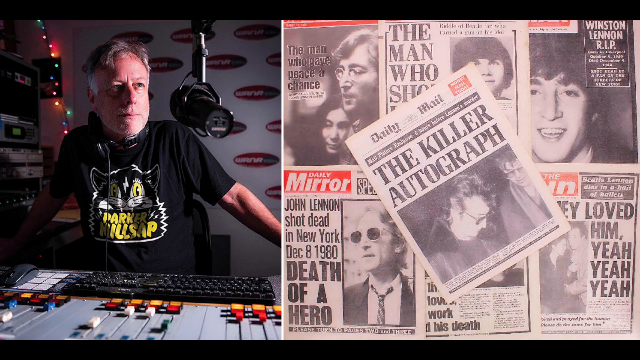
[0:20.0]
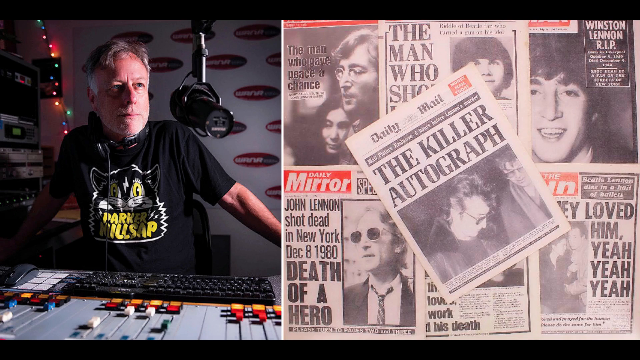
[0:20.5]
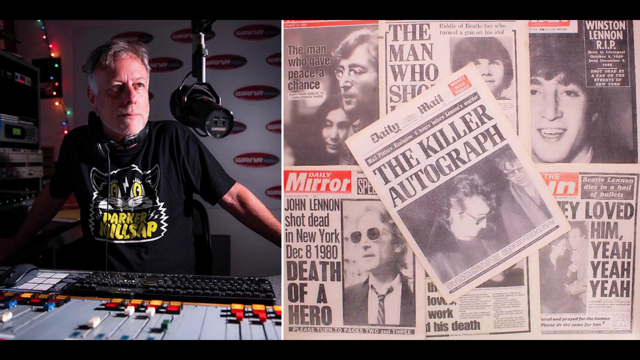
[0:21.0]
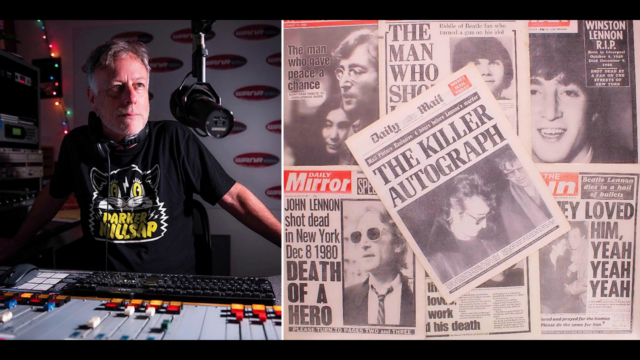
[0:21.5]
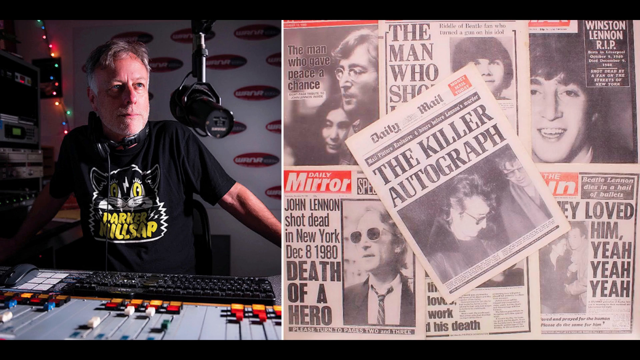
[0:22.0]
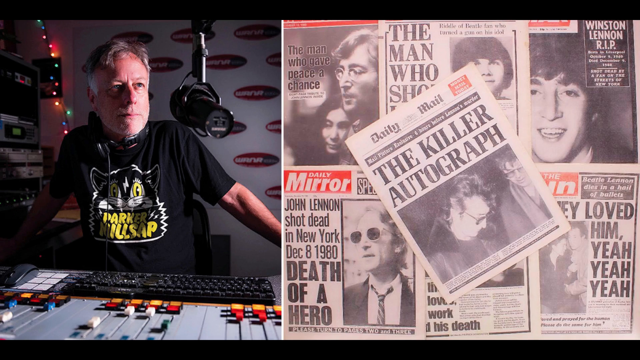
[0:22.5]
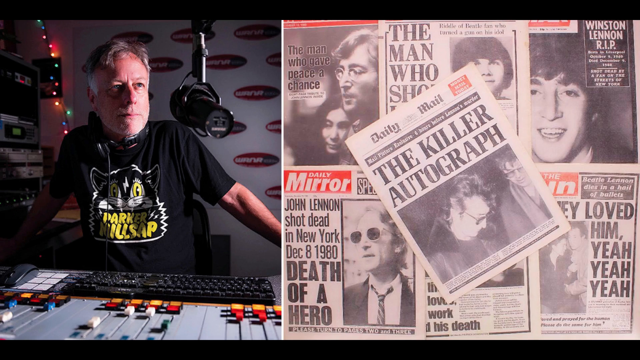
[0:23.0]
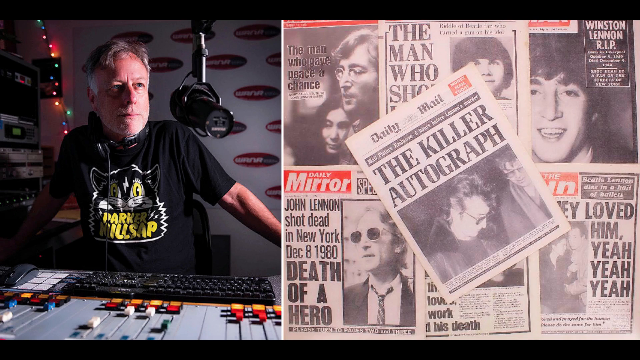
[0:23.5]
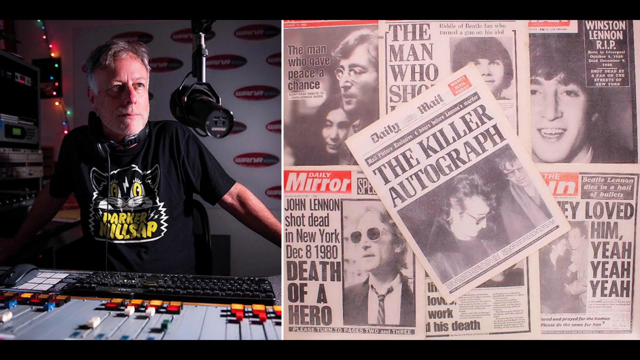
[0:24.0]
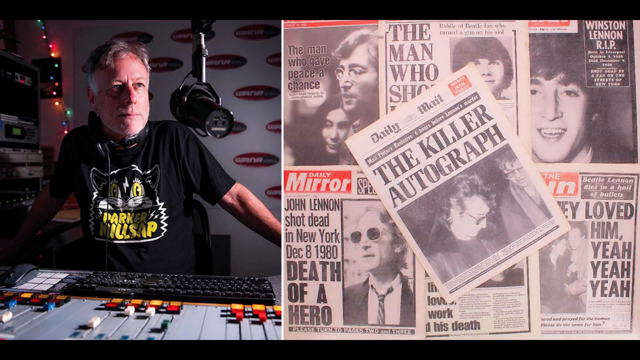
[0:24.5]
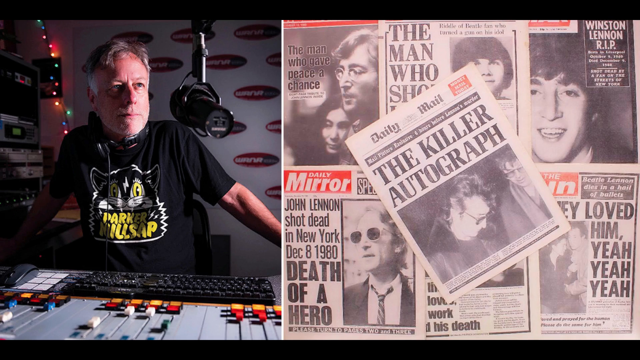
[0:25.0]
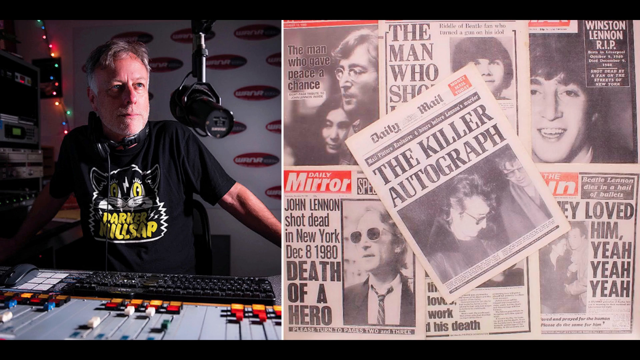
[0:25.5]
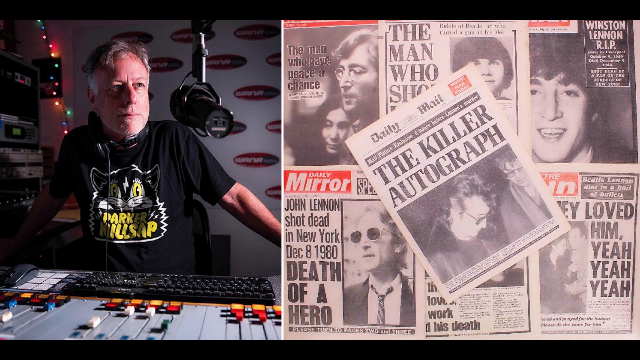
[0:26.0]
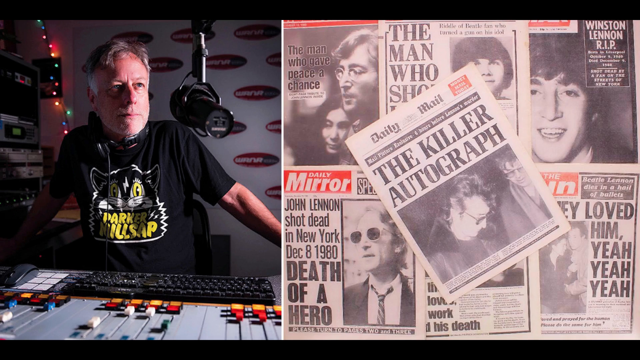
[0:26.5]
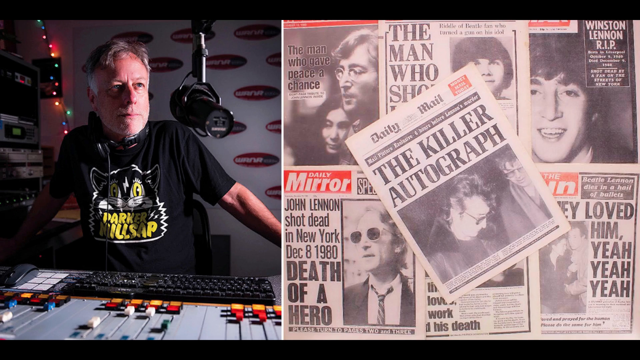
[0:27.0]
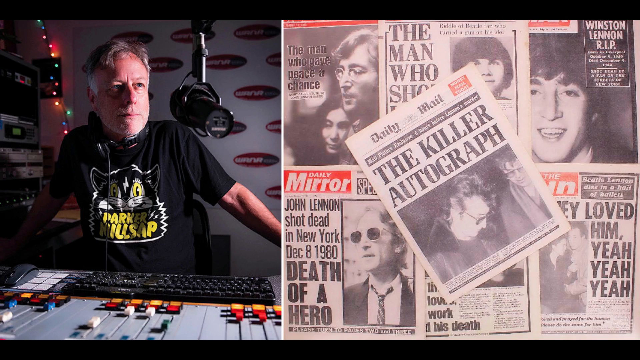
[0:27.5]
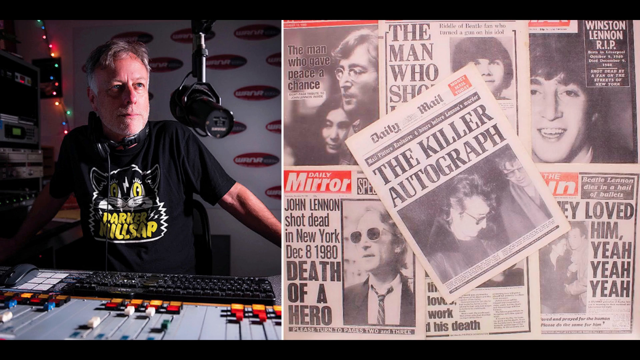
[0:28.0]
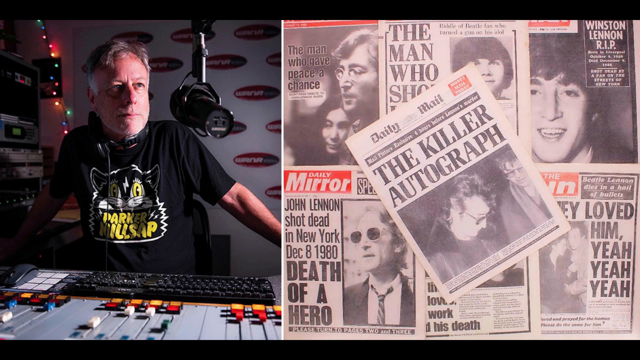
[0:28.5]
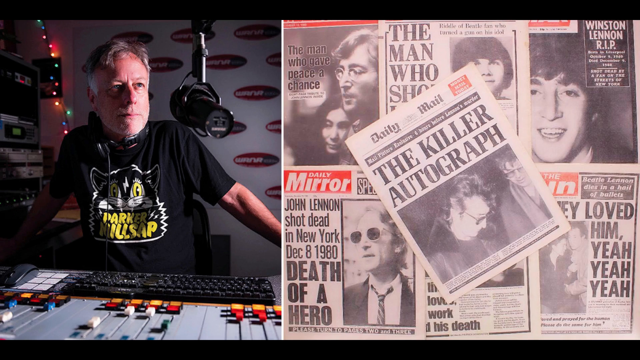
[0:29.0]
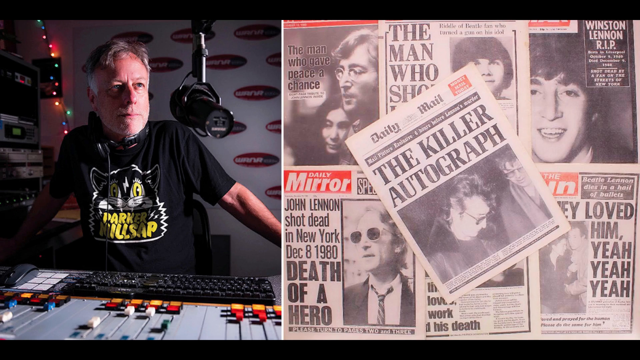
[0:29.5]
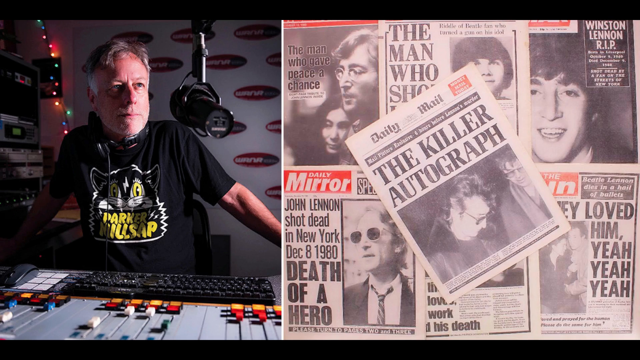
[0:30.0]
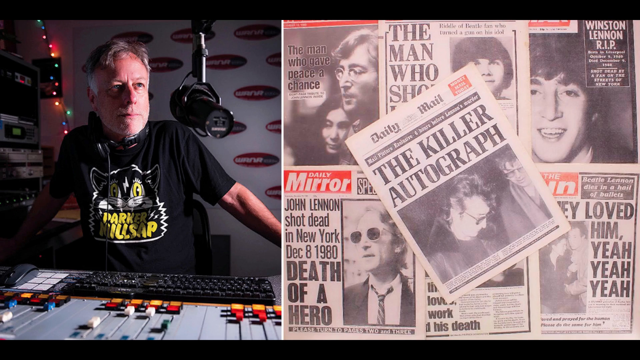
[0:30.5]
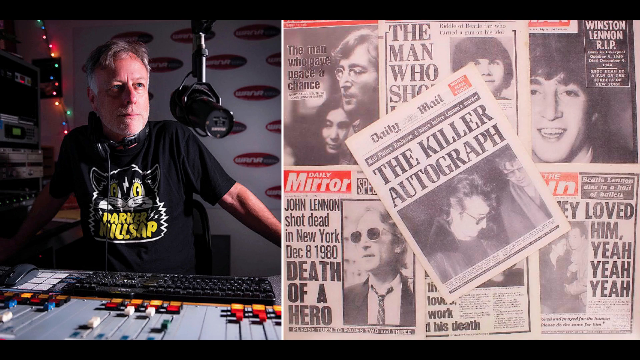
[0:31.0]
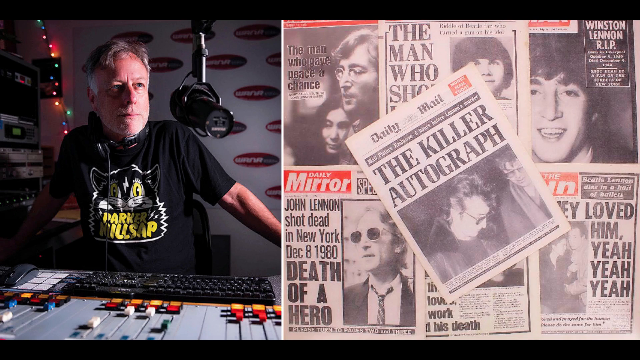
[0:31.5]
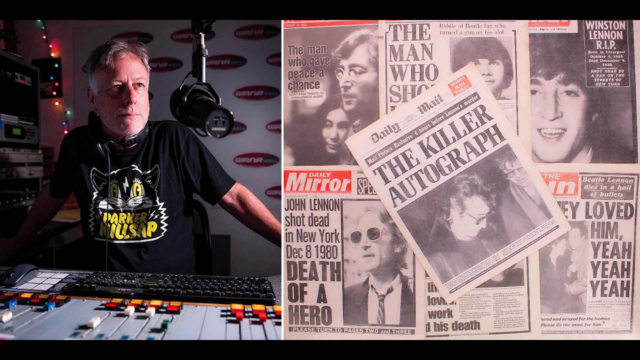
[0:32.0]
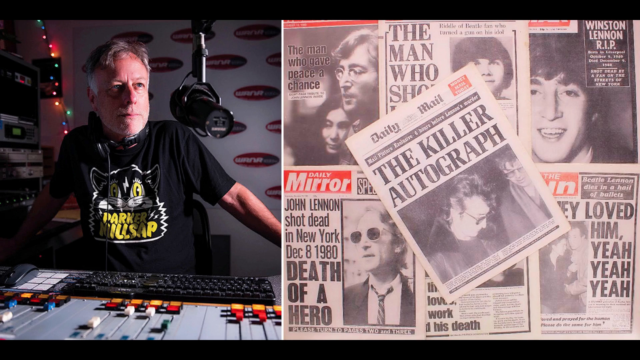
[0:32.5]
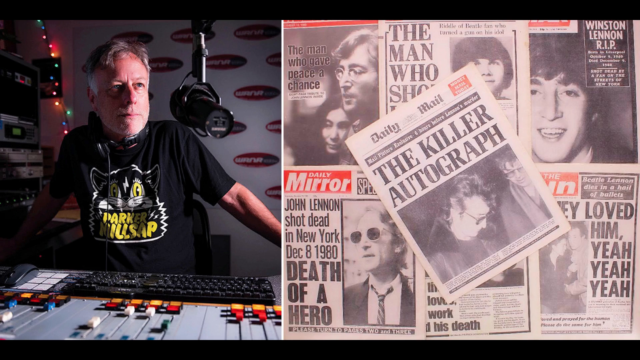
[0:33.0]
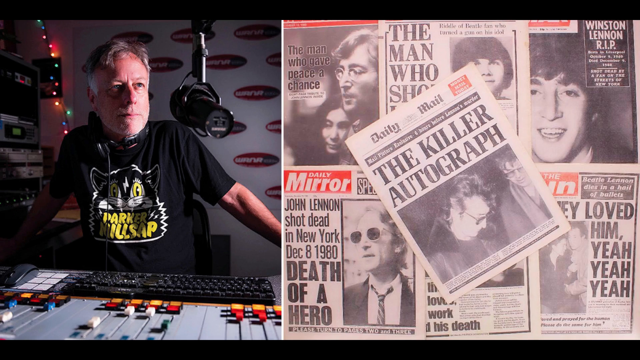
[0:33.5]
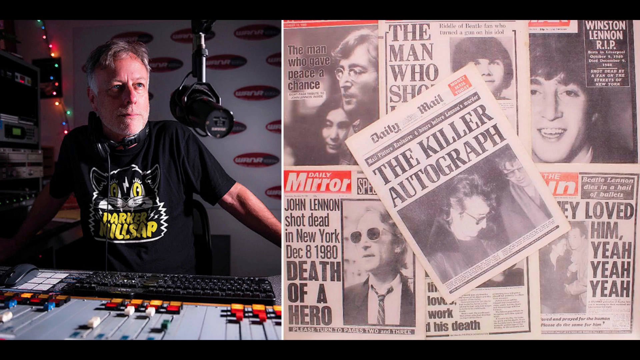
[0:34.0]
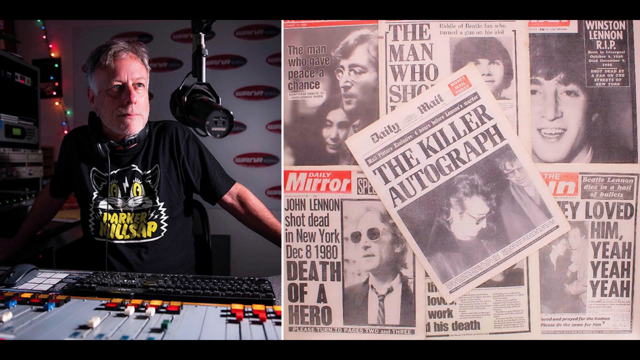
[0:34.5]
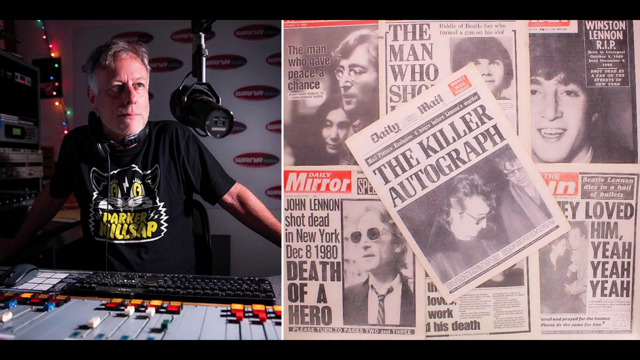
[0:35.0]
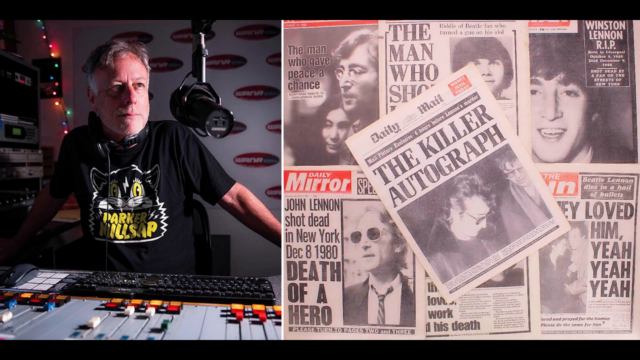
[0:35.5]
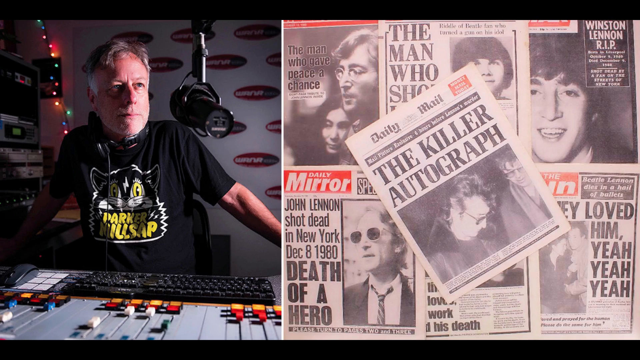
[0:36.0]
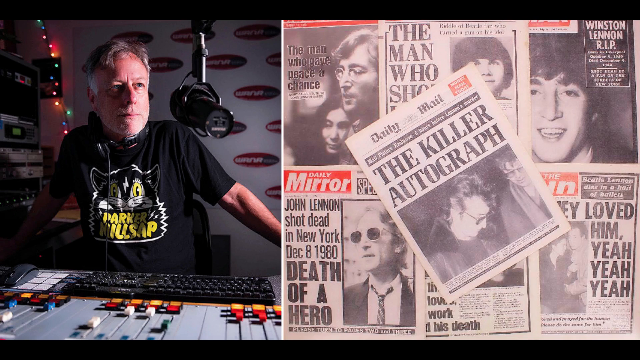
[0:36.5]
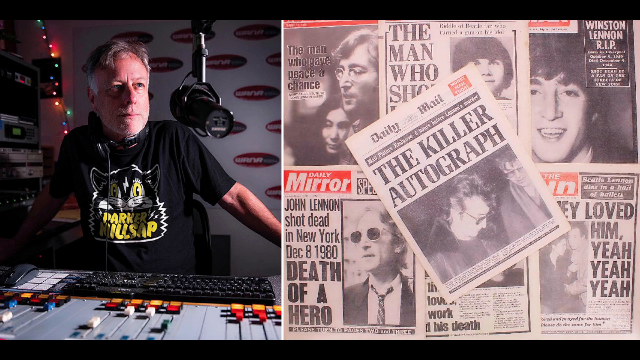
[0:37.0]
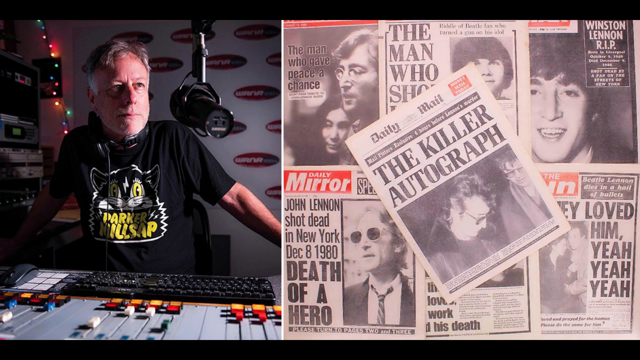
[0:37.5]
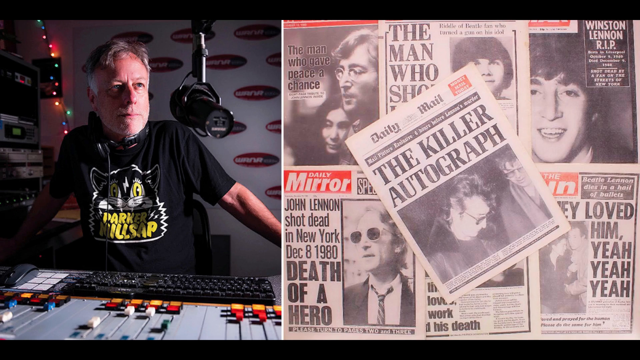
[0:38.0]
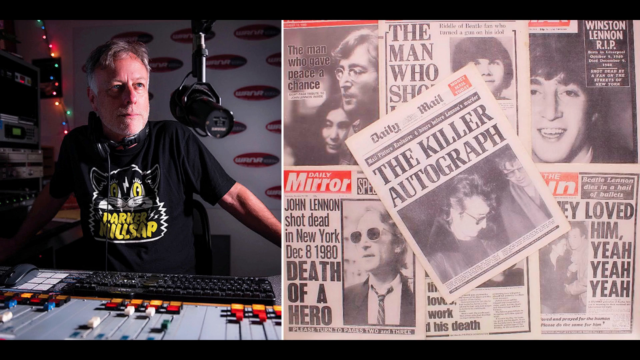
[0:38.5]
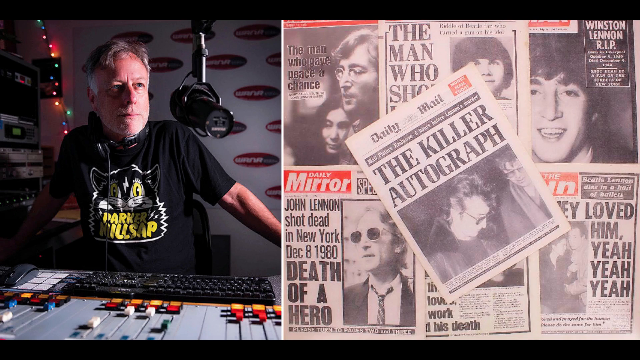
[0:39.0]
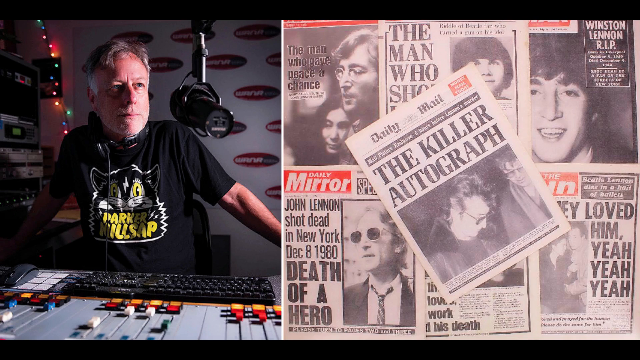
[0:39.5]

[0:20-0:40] The same split-screen view continues, with the radio disc jockey on the left and the newspaper clippings on the right. The right side appears to show six different newspaper front pages laid out, three on the top and three on the bottom, with a seventh newspaper resting on top of the grid, slanted a little to the left. This top newspaper is in black and white, with a large headline that reads "the killer autograph" and a picture of a man with his head down, wearing glasses, with black hair. He stands next to what appears to be a woman with glasses and short hair who looks to have a scarf on; the image is a profile shot from the chest up. On the clippings in the back, some headlines can be made out. The first one on the top says "the man who shot", and the rest is blocked by the slanted newspaper; it looks to have a picture of John Lennon with his wife Yoko Ono. To the right of that is a partial view of what looks to be a young child with black hair, and to the right of that is what looks to be a young white man with dark hair. A headline in bold white letters reads "Winston Lennon RIP".